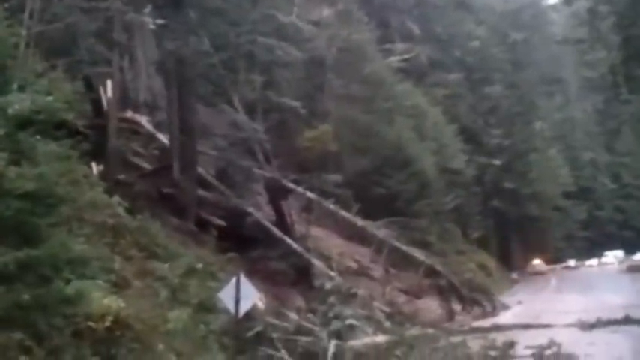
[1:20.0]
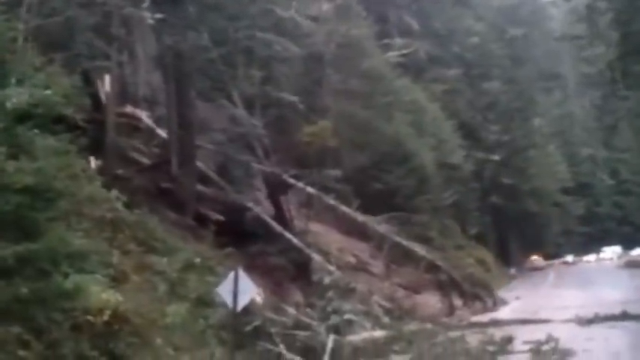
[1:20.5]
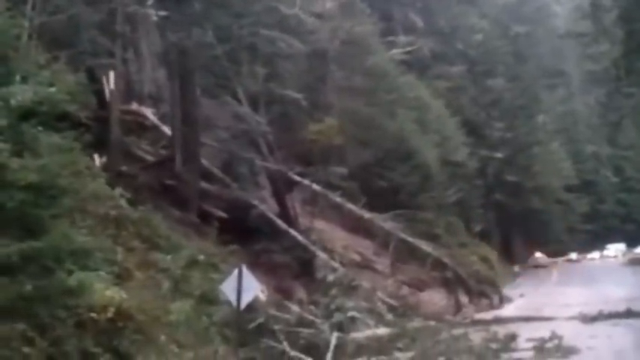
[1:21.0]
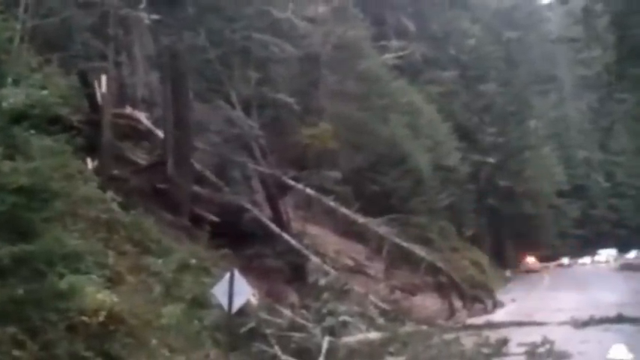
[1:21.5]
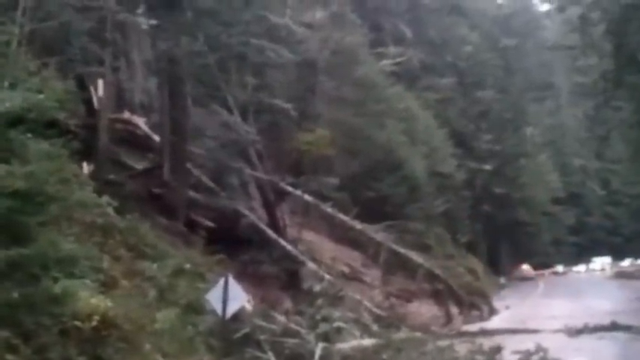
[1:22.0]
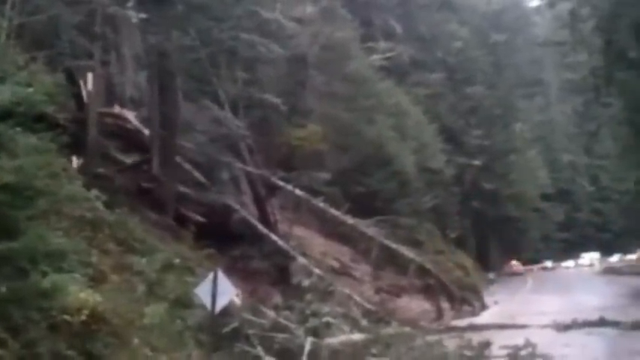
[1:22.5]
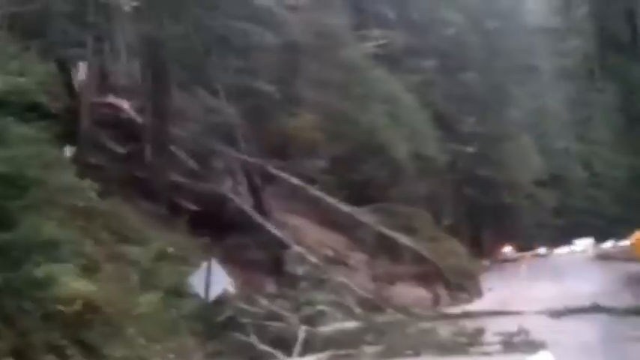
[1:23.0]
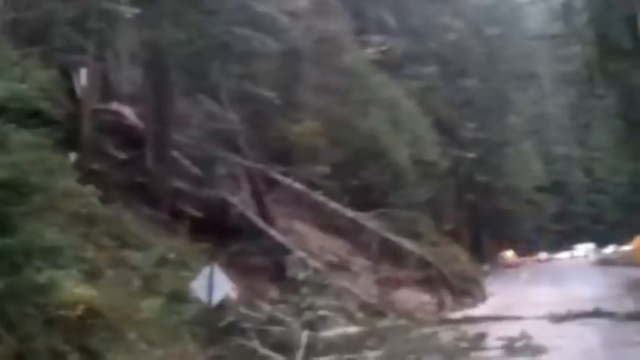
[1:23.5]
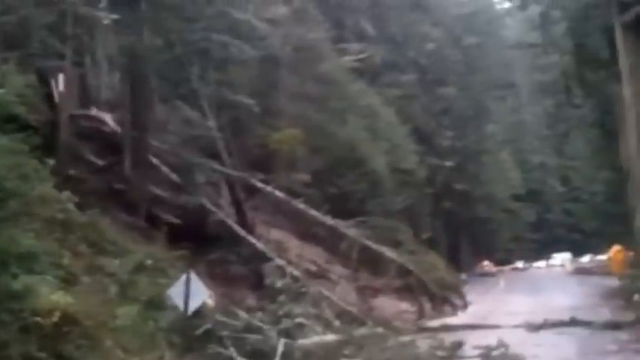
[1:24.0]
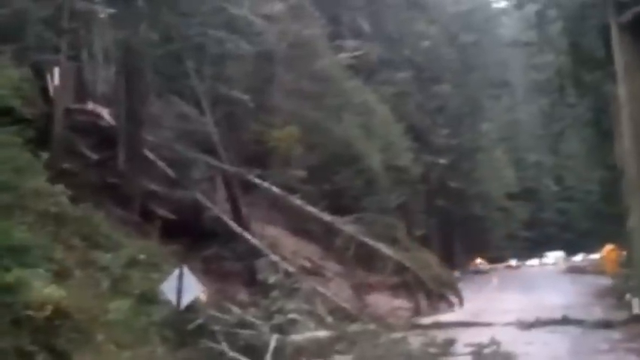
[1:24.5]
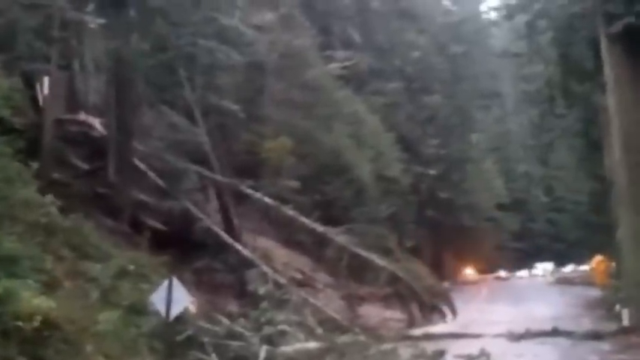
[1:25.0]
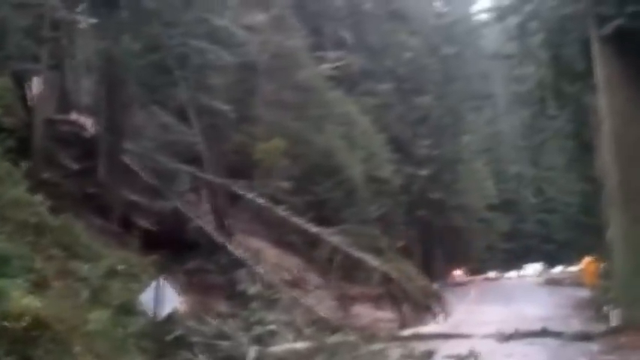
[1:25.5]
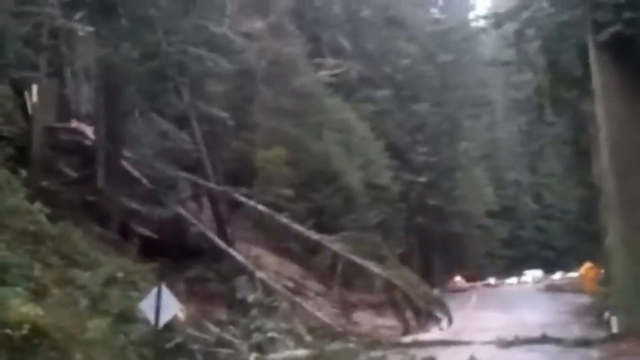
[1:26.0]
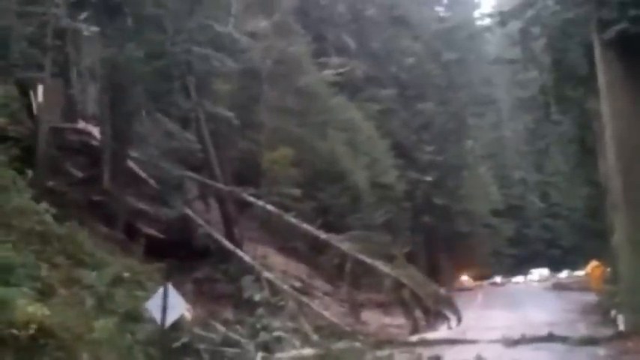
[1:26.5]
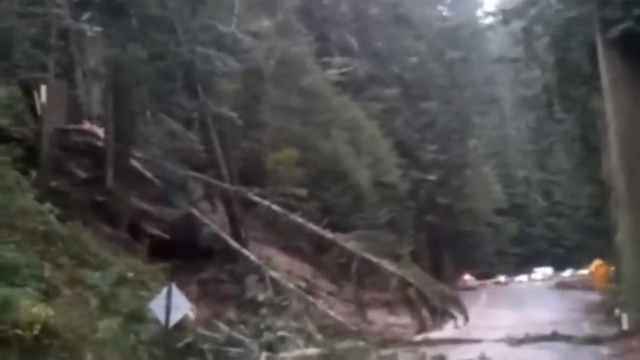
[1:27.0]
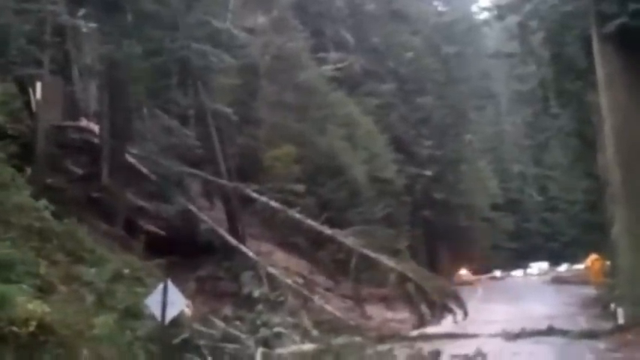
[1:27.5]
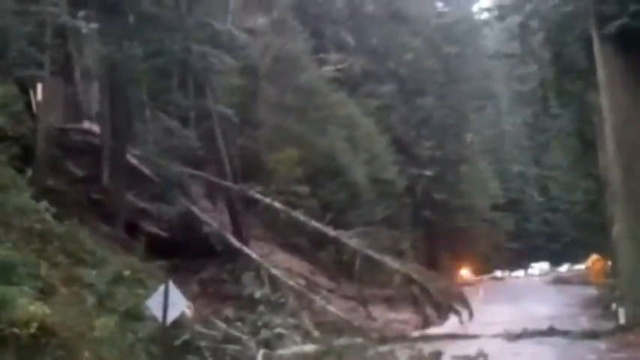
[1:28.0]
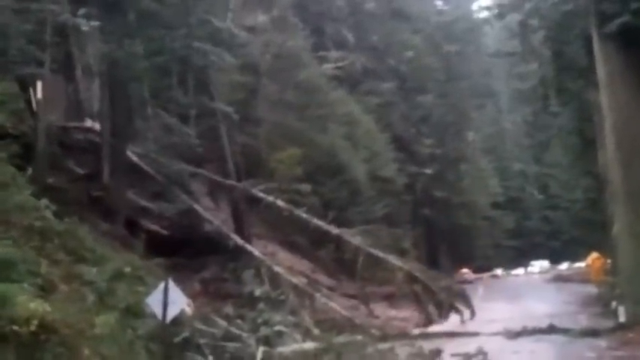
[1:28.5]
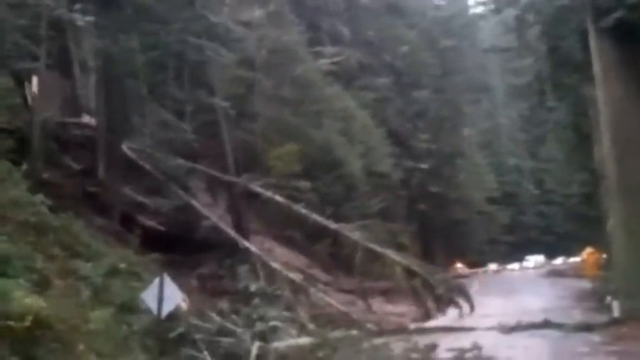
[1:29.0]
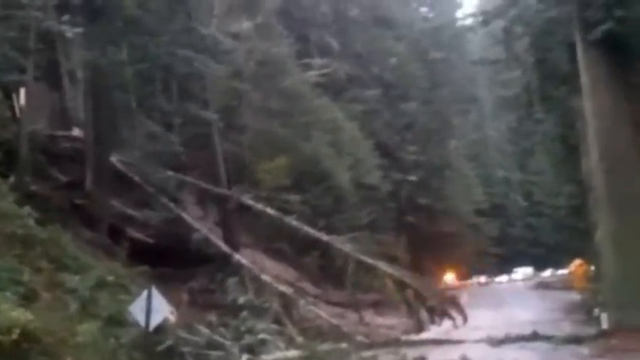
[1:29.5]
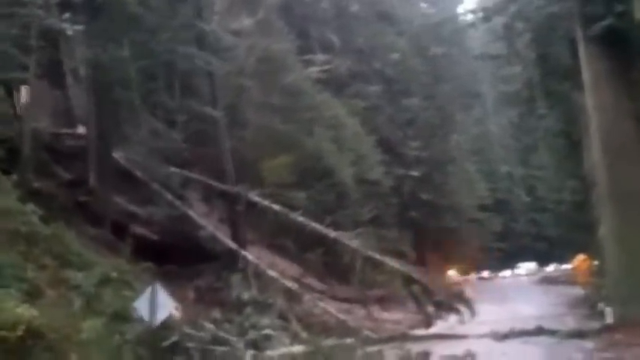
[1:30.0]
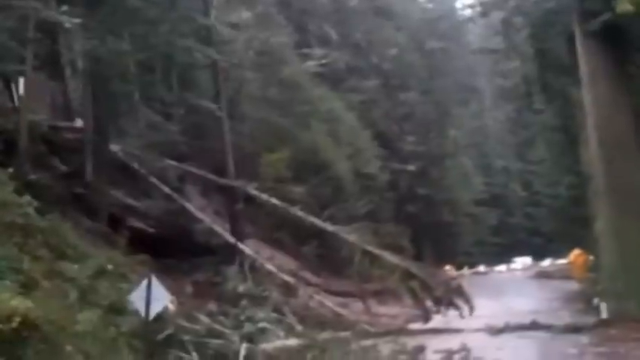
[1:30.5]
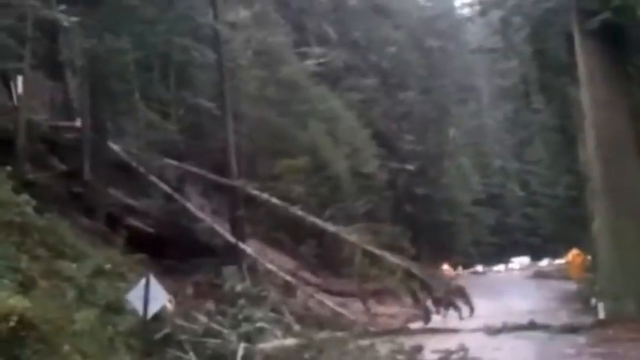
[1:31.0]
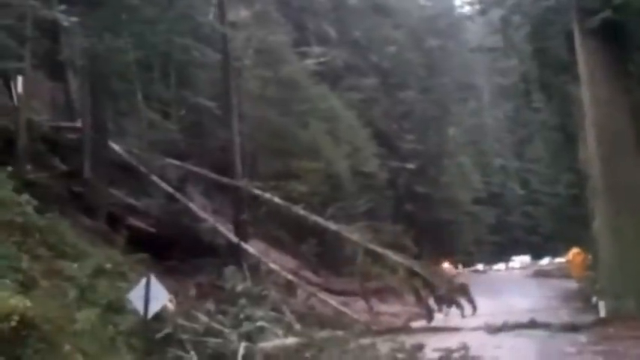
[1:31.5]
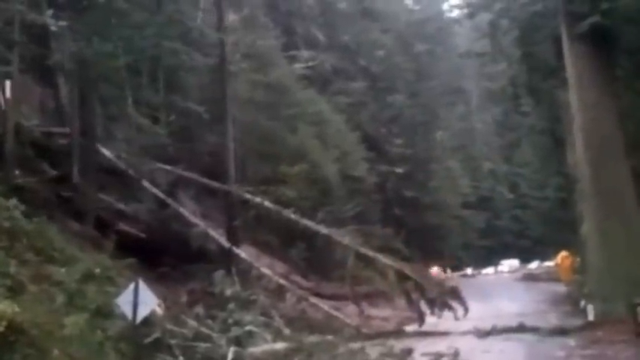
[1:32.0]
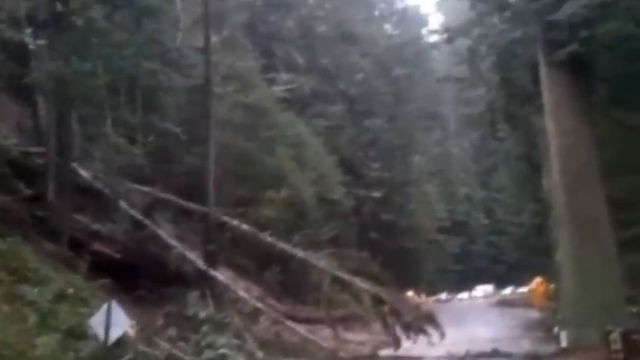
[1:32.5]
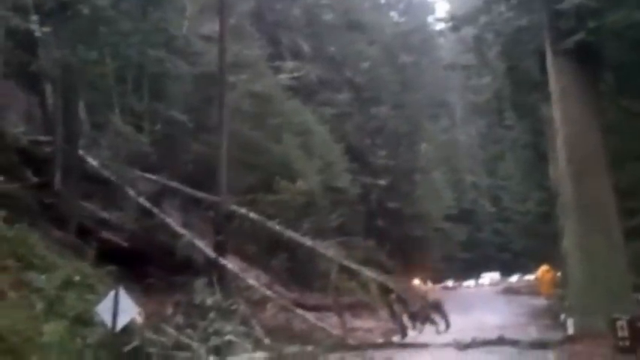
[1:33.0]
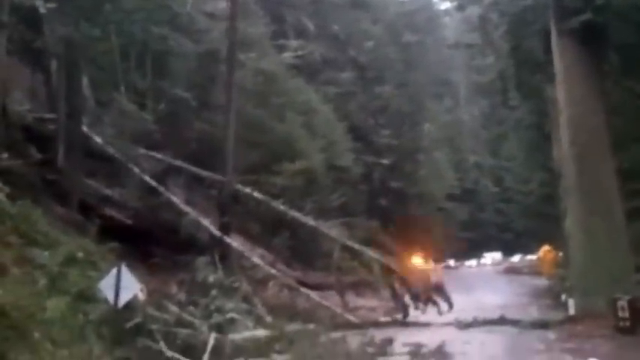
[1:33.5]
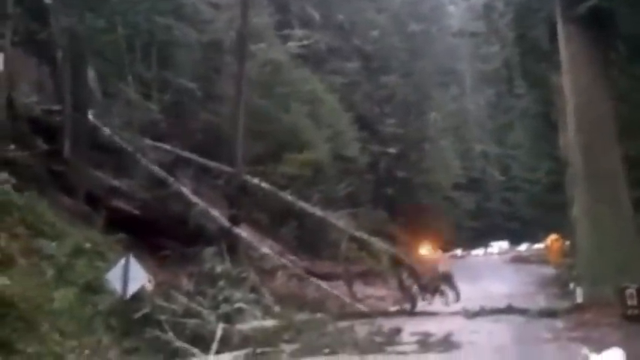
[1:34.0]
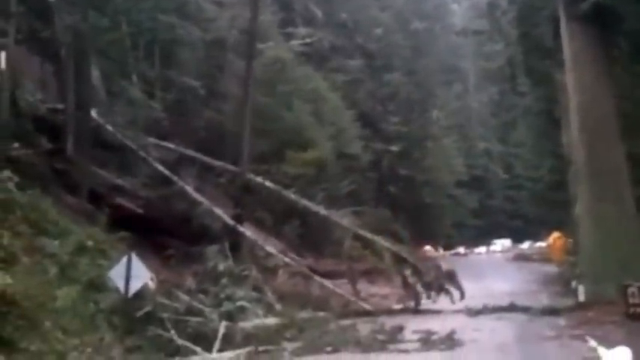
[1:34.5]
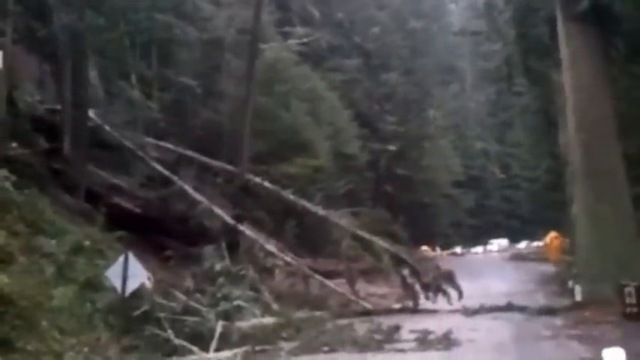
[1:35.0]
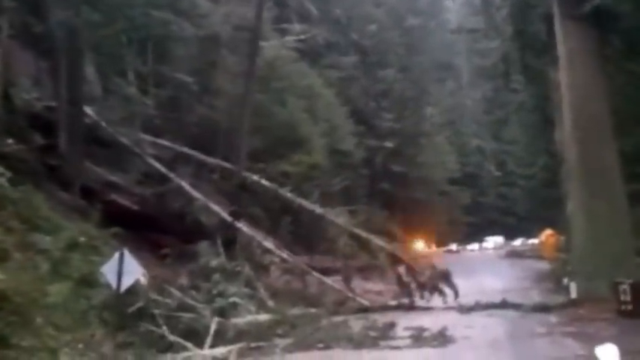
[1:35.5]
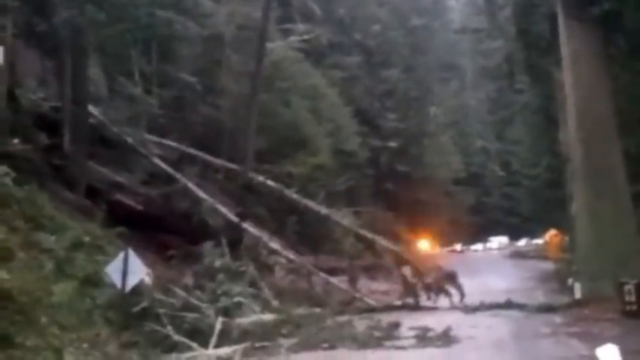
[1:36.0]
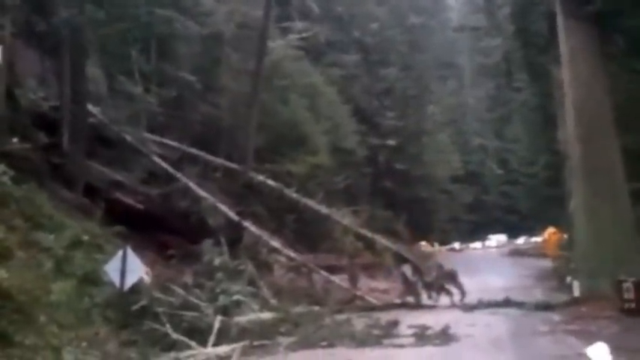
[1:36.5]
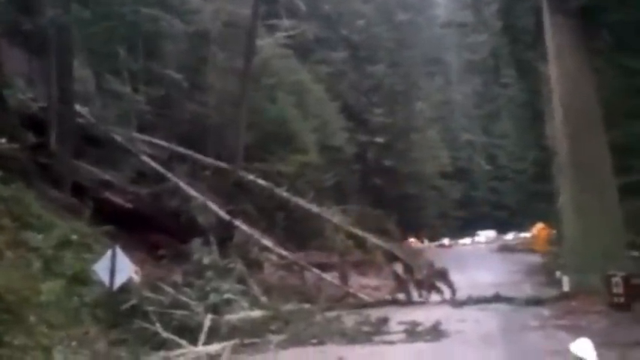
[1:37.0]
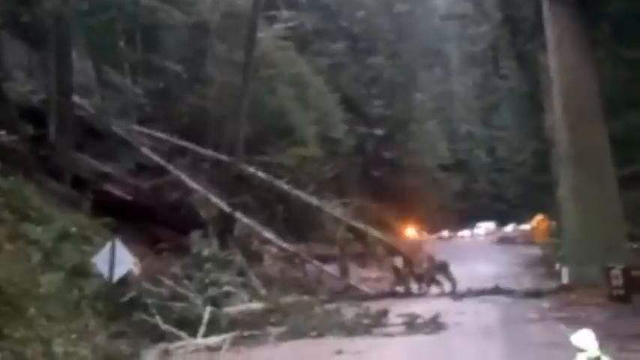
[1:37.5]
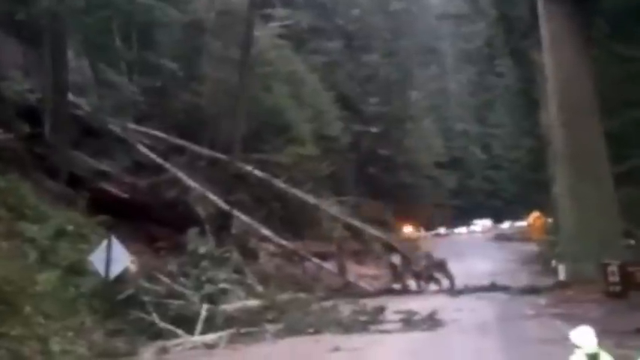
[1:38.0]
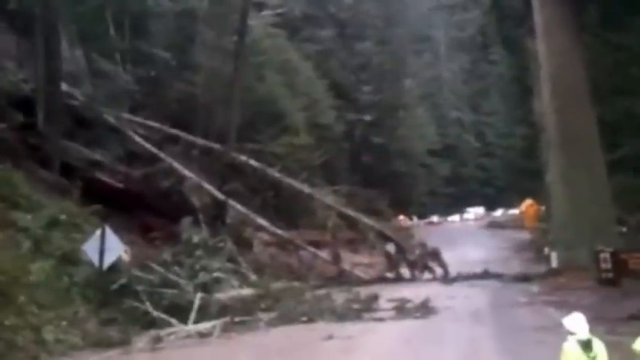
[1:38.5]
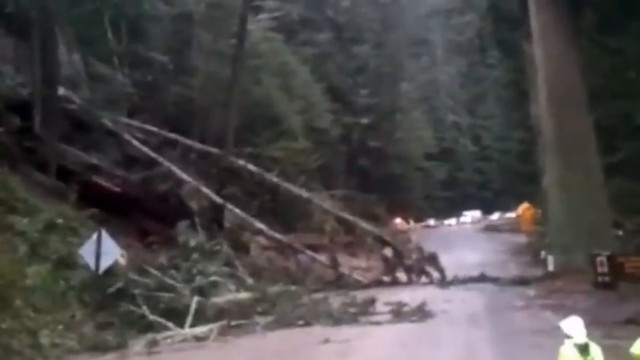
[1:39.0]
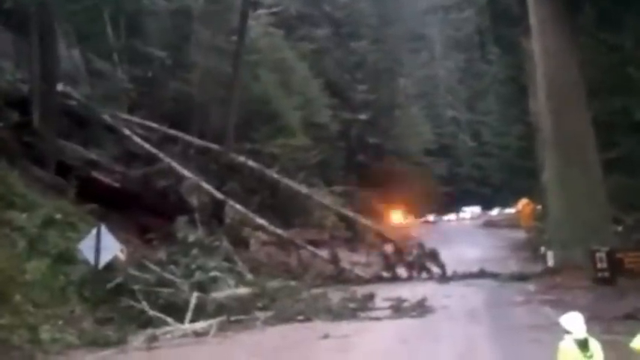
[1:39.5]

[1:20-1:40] Lots of trees surround a narrow road. At the far end of the road is a car with siren lights on, with a few other cars to its right. A sign is lopsided over as a tree falls and tree pieces slide forward toward the other end of the road. There seem to be people there trying to manage the area. At the end, a person in a white protective helmet and an all-yellow jumpsuit points up toward the falling or sliding tree, apparently to get someone's attention.